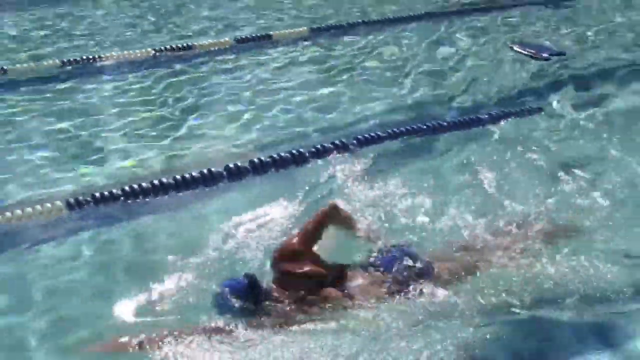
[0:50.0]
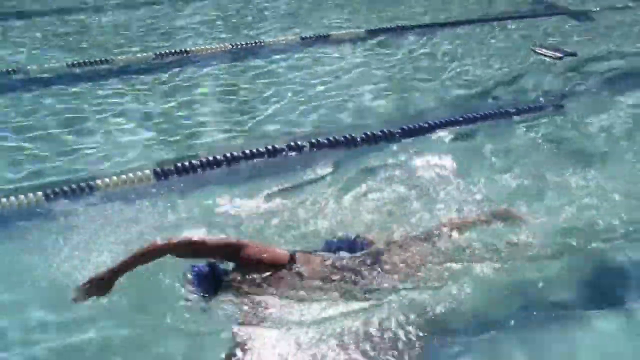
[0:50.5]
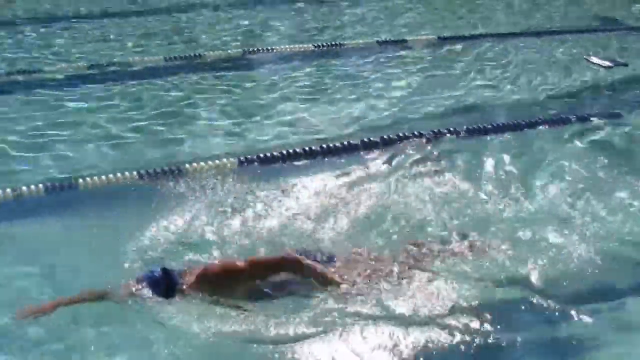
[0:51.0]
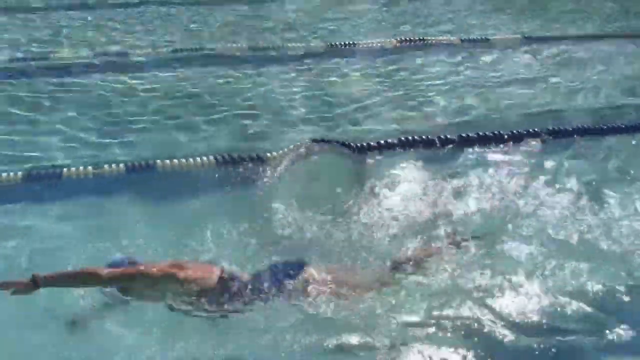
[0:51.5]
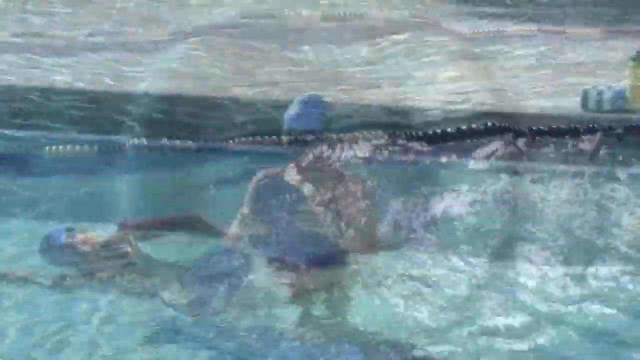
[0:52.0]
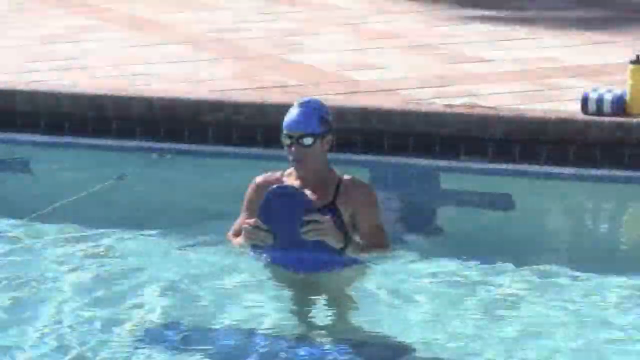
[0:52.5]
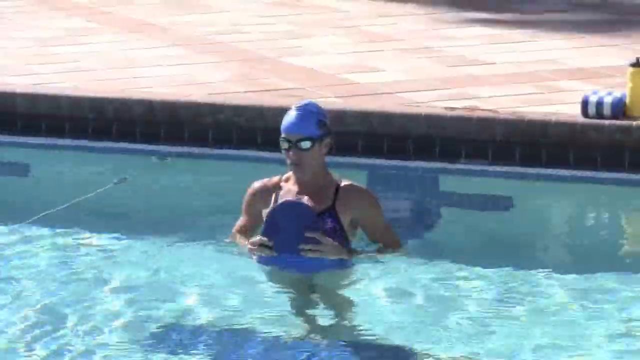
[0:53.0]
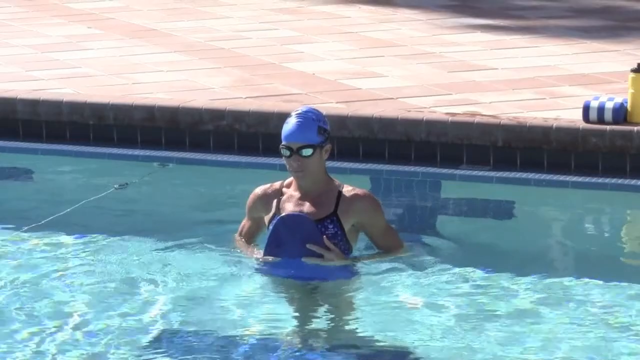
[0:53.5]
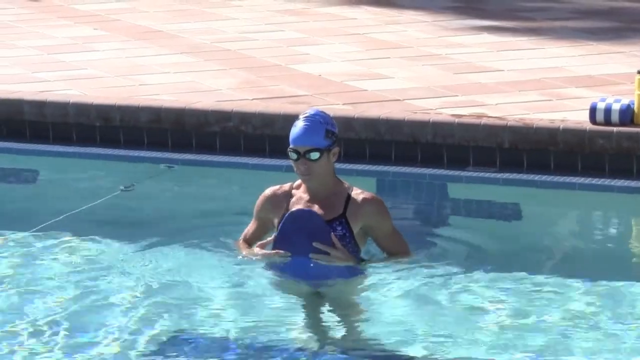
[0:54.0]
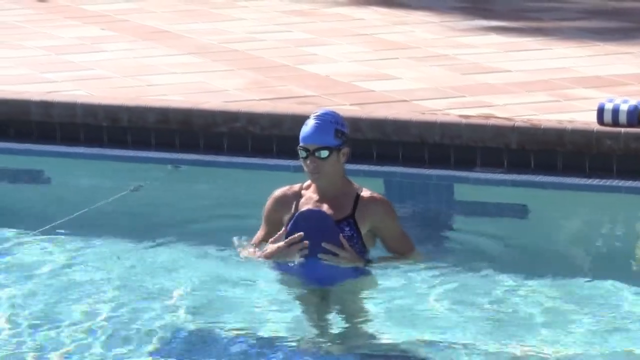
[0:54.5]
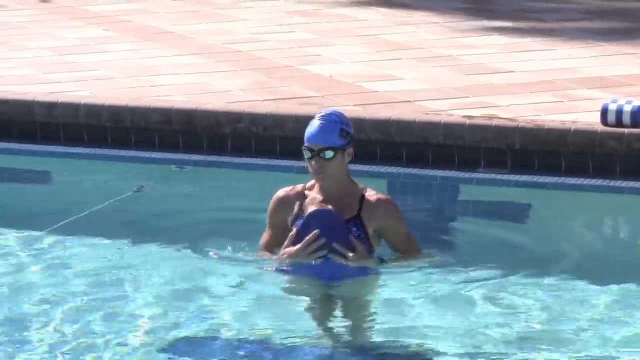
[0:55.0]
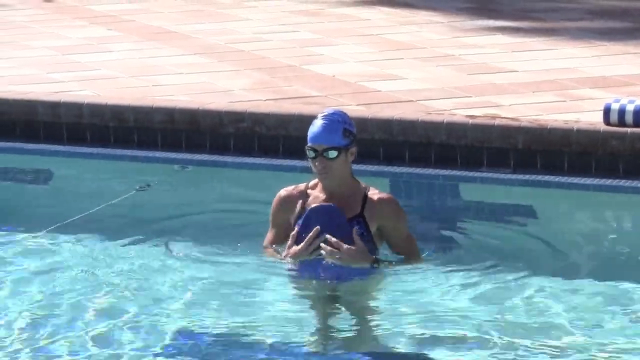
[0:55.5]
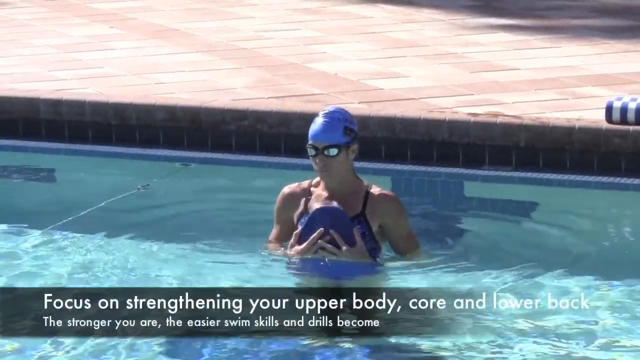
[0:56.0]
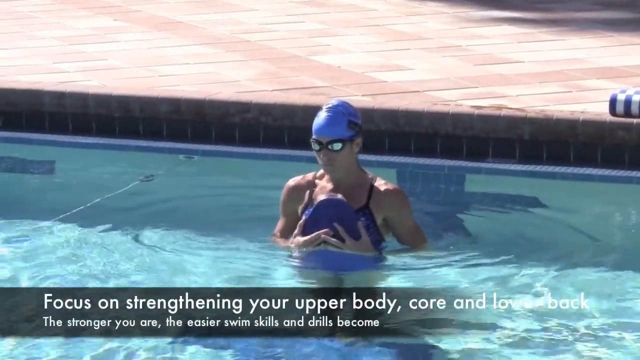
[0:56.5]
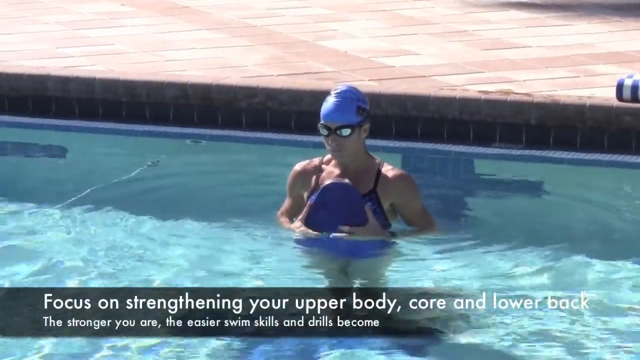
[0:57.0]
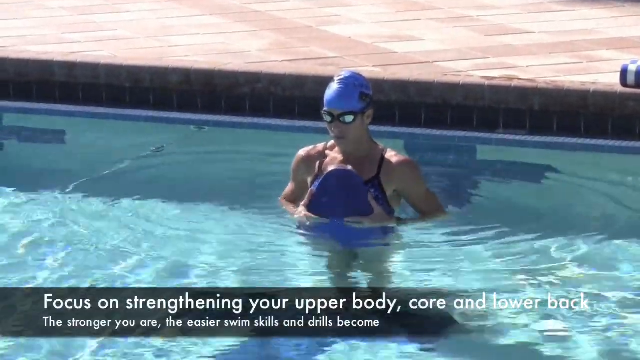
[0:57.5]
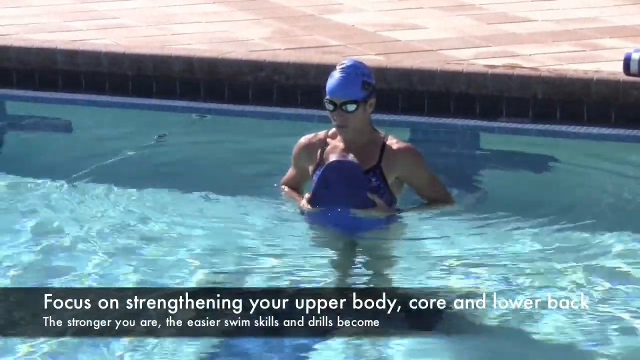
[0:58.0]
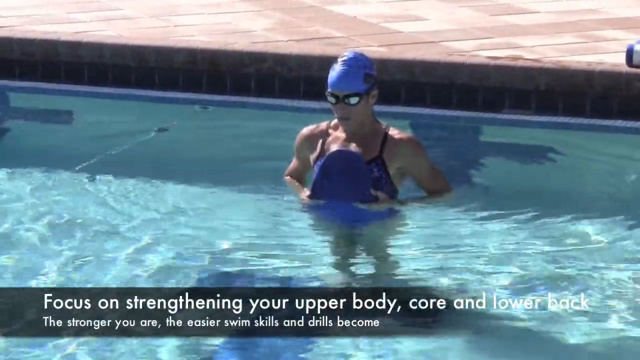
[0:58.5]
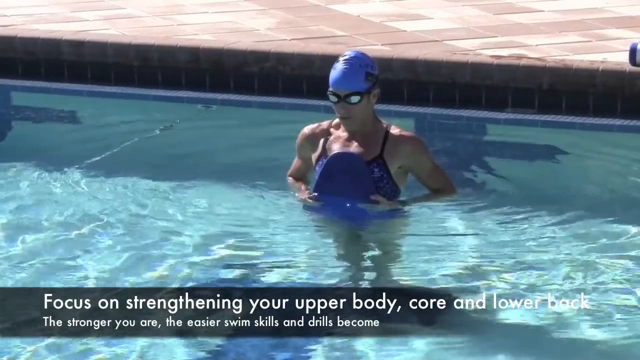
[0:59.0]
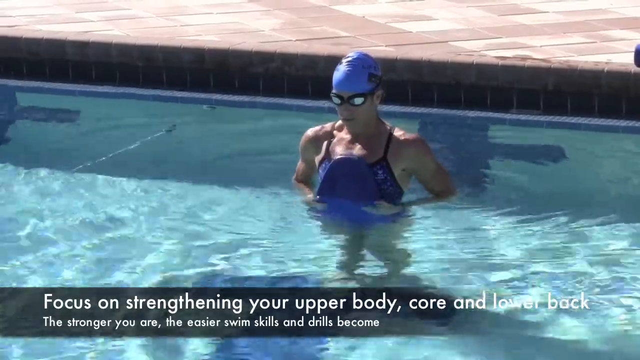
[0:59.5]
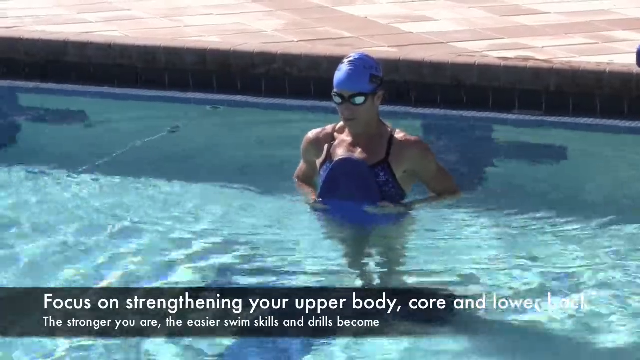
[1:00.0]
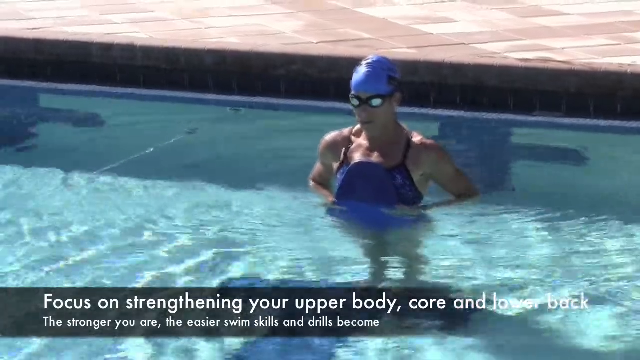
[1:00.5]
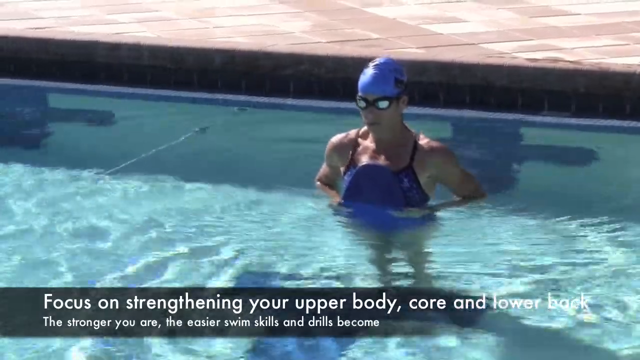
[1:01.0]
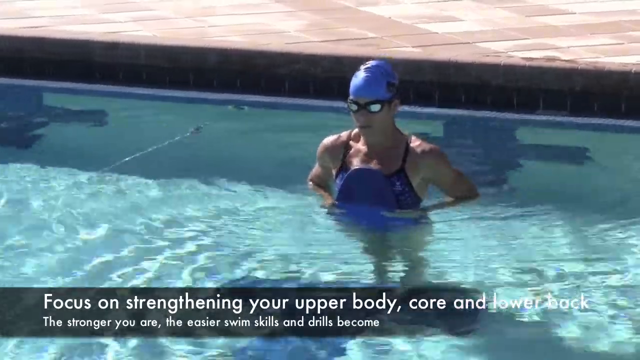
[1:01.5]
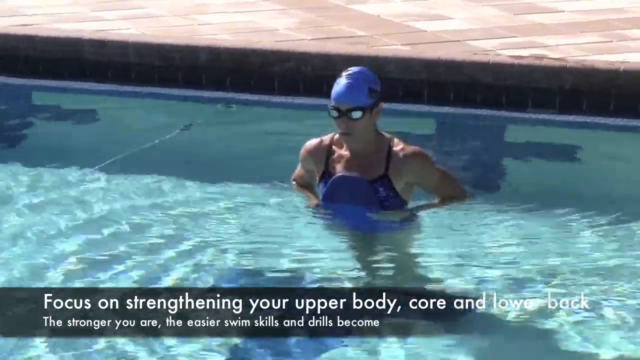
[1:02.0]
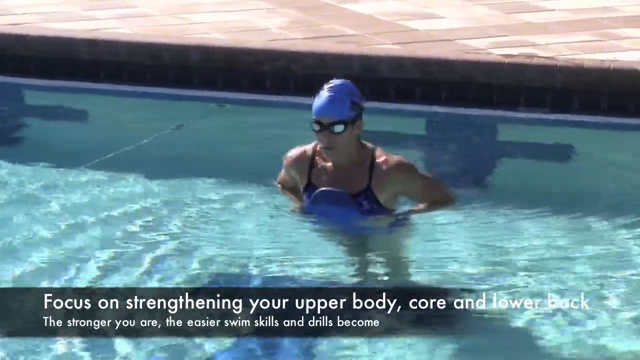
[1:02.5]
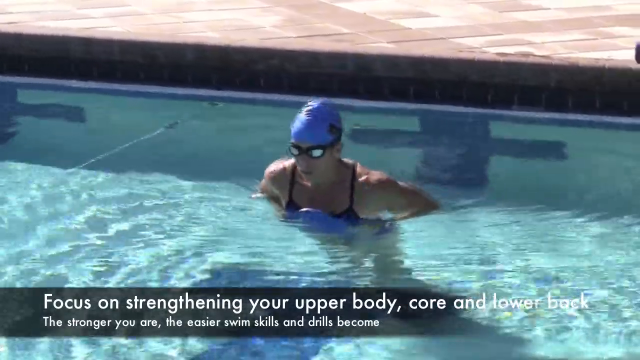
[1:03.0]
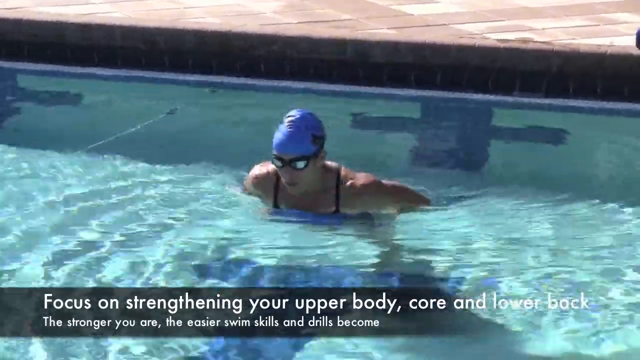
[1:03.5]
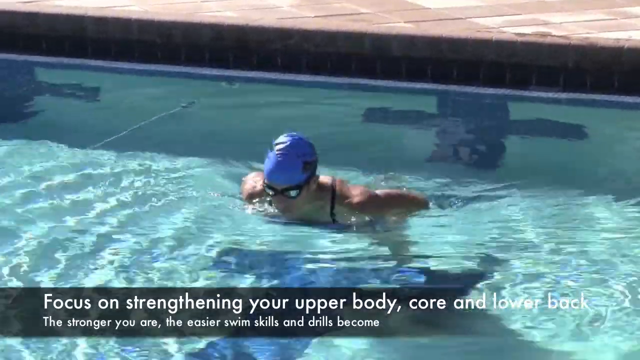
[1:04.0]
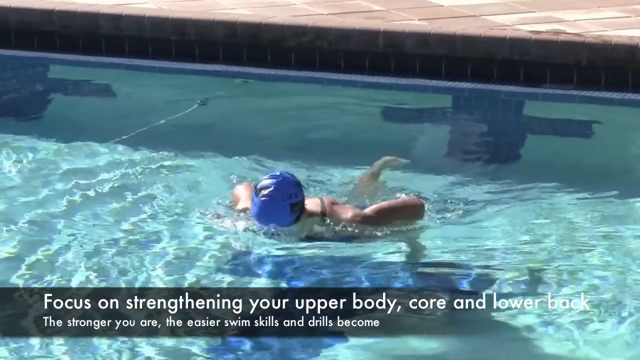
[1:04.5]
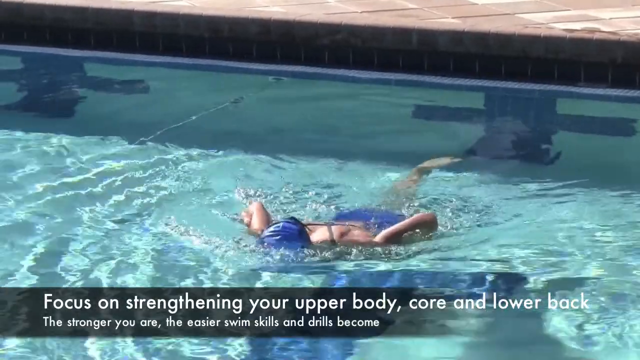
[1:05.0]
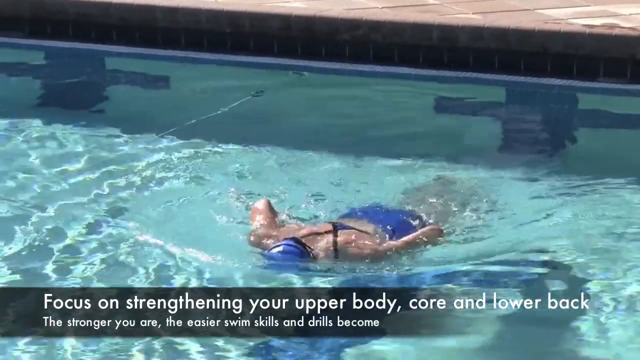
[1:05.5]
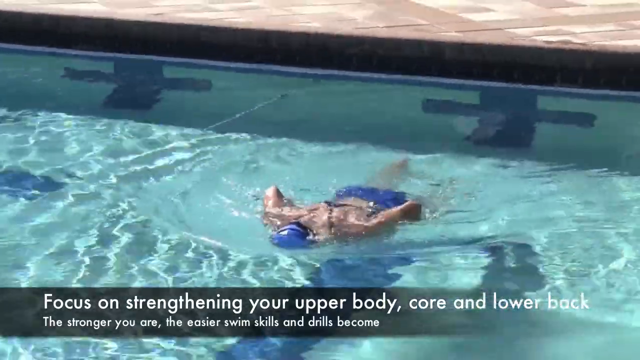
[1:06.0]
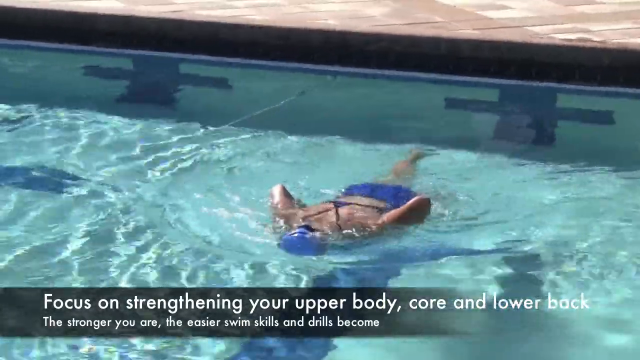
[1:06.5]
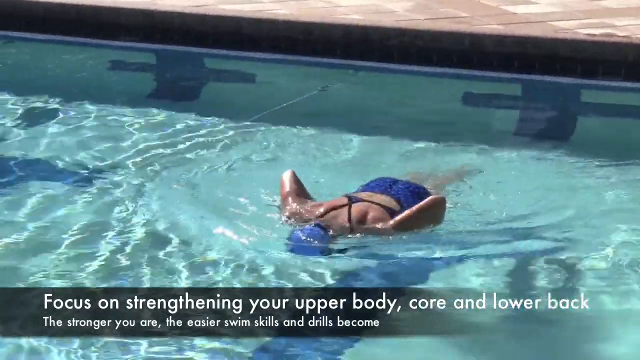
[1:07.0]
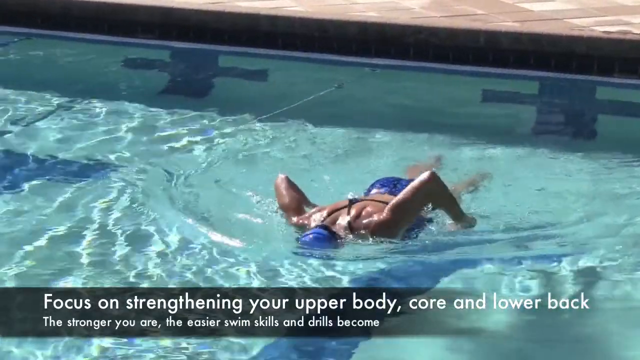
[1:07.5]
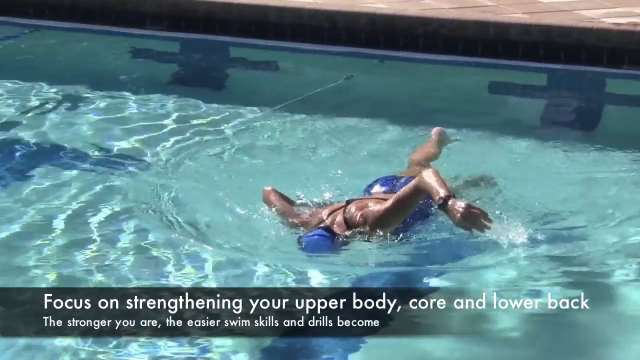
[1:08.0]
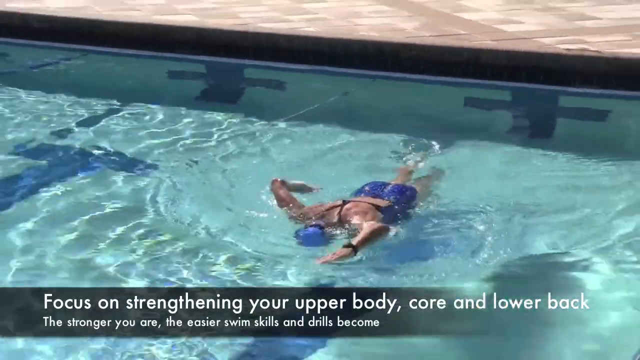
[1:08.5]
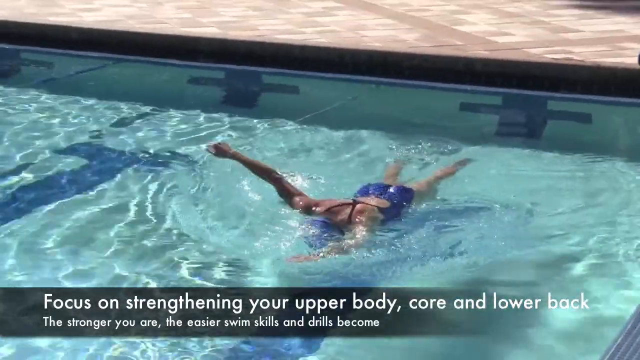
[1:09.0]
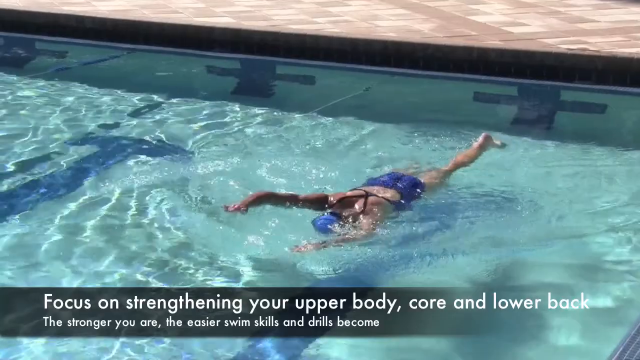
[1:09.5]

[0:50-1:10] The person tries to swim, and when the person starts swimming the swimming kit slips away. Text appears that seems to focus on strengthening the upper body, core and lower back, reading "the stronger you are, the easier swimming skills and drills become".